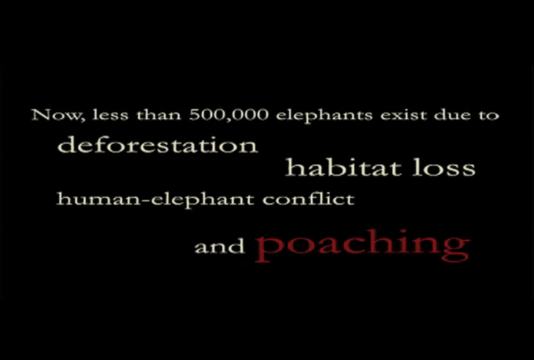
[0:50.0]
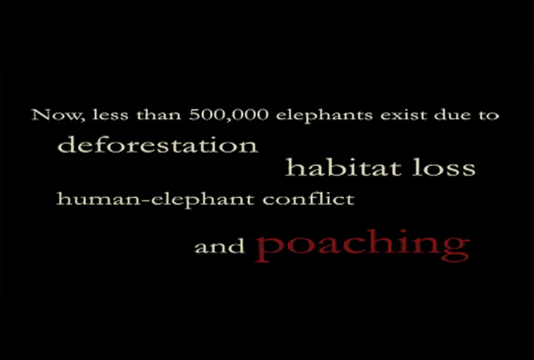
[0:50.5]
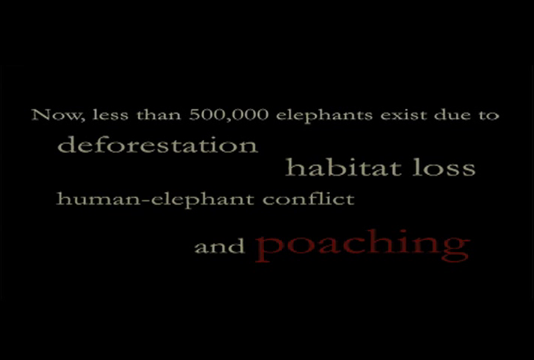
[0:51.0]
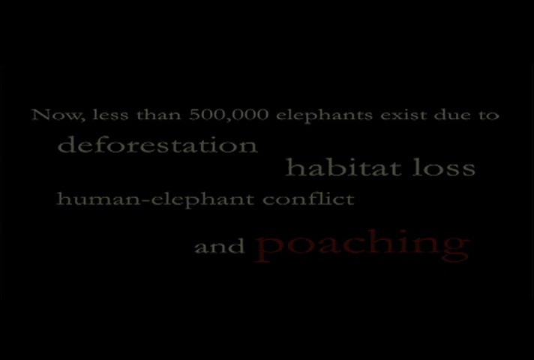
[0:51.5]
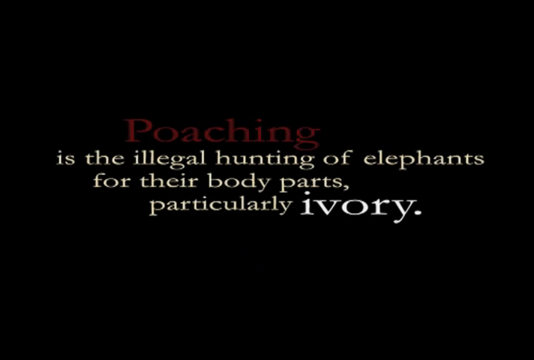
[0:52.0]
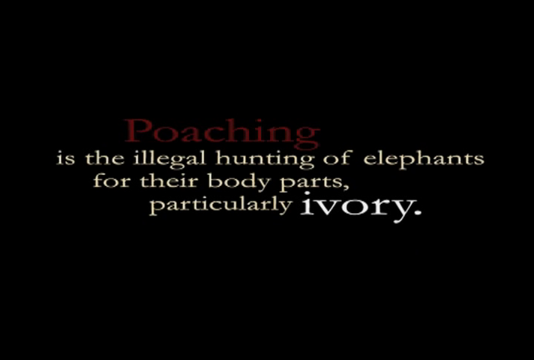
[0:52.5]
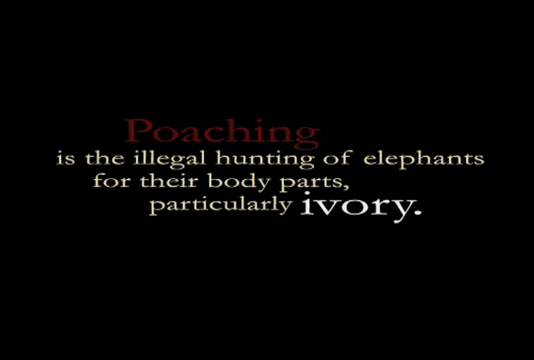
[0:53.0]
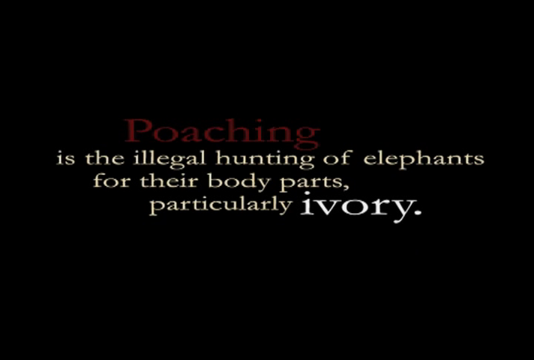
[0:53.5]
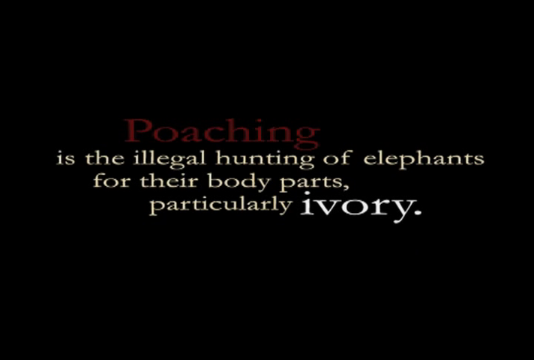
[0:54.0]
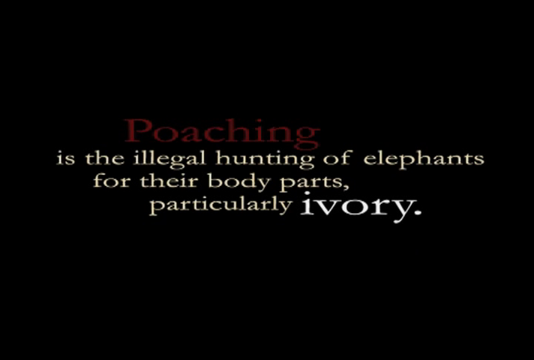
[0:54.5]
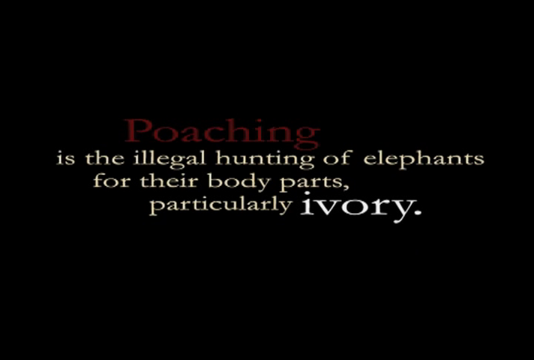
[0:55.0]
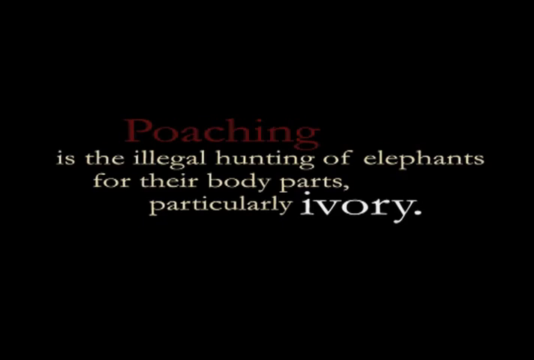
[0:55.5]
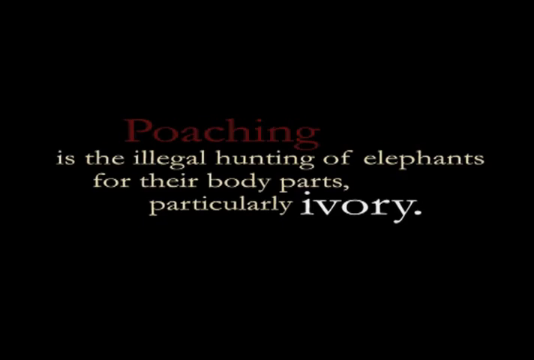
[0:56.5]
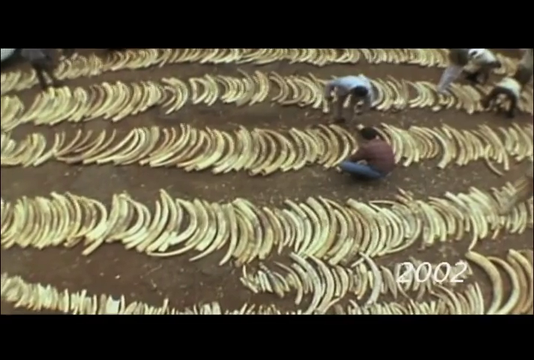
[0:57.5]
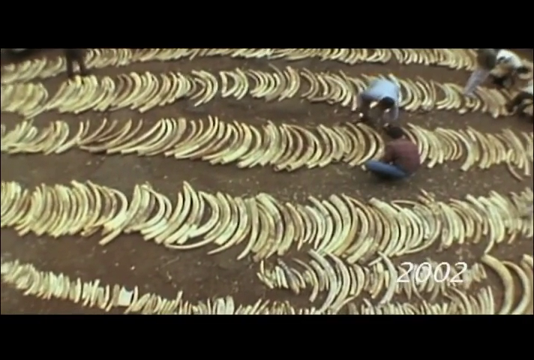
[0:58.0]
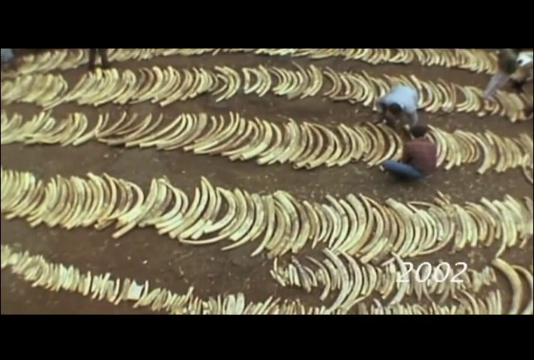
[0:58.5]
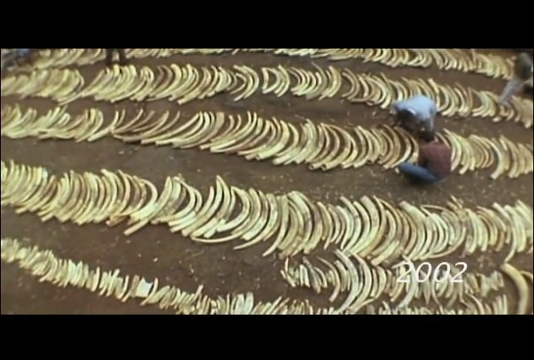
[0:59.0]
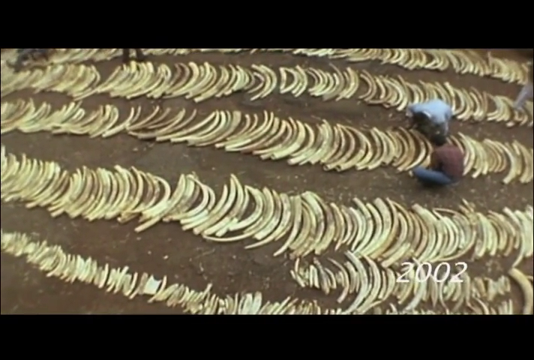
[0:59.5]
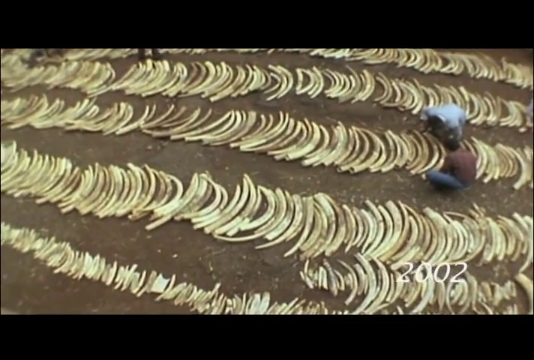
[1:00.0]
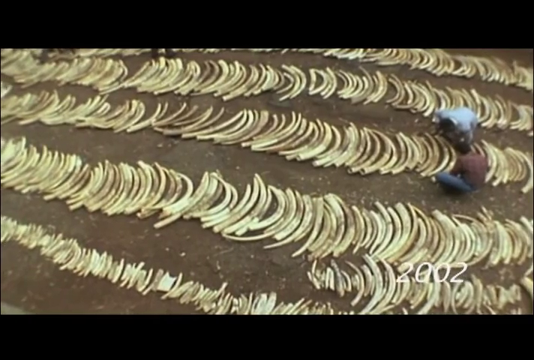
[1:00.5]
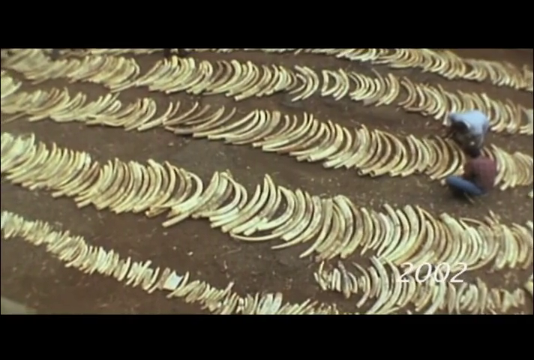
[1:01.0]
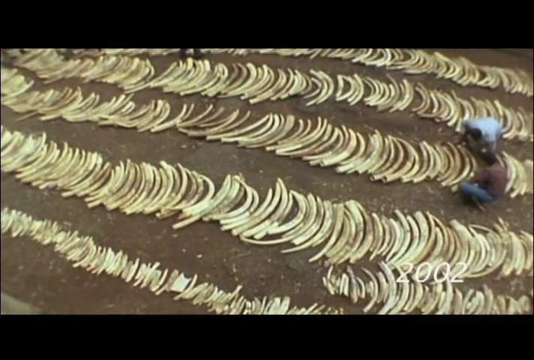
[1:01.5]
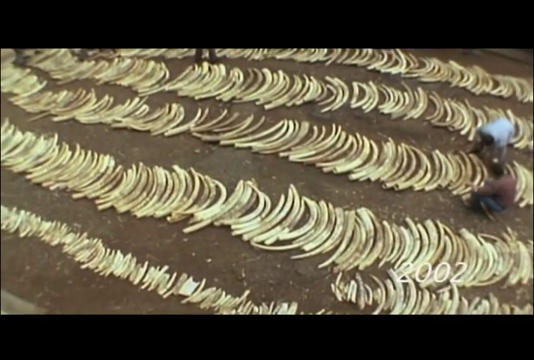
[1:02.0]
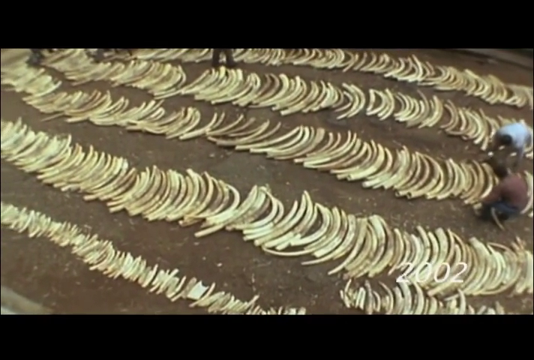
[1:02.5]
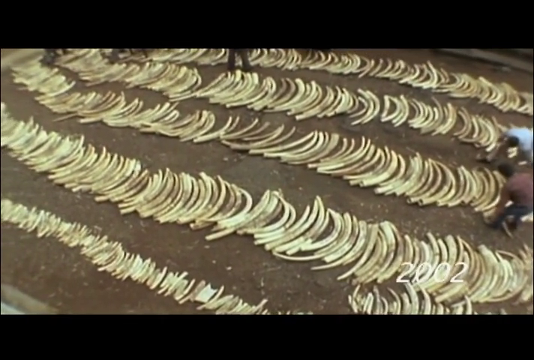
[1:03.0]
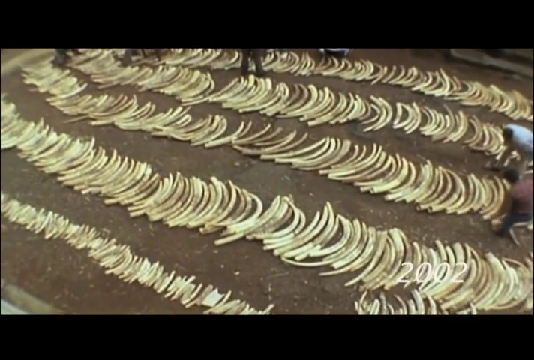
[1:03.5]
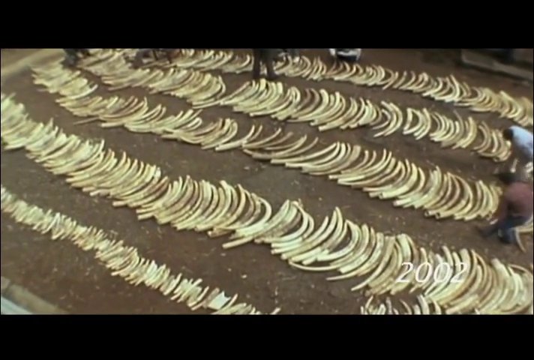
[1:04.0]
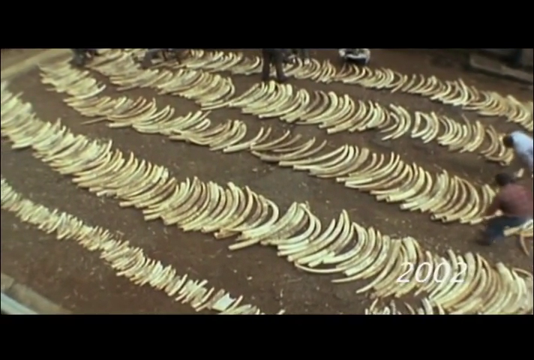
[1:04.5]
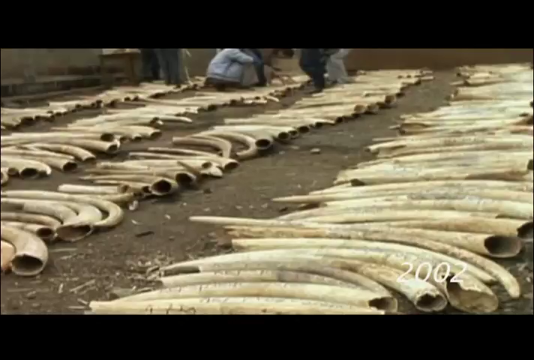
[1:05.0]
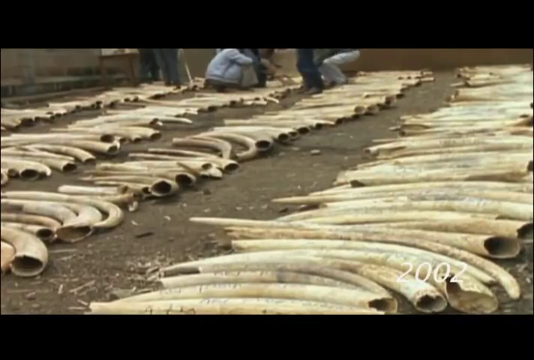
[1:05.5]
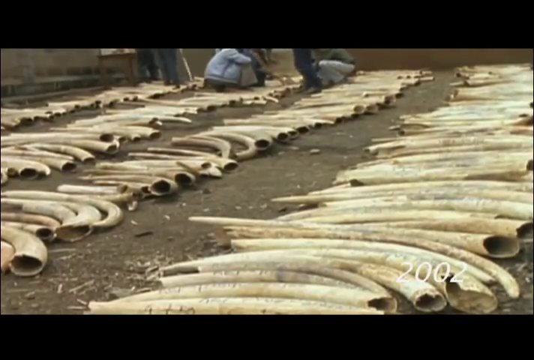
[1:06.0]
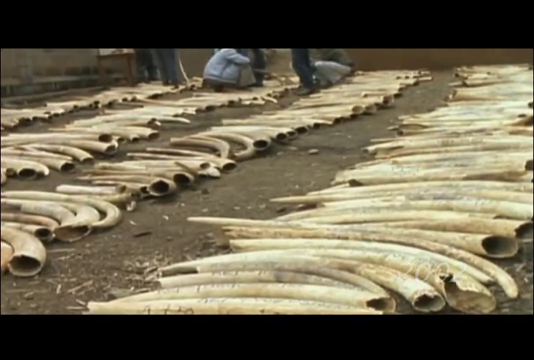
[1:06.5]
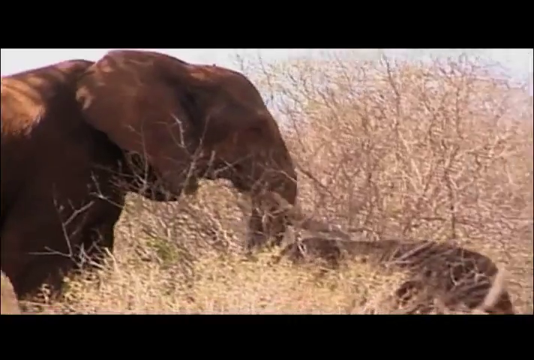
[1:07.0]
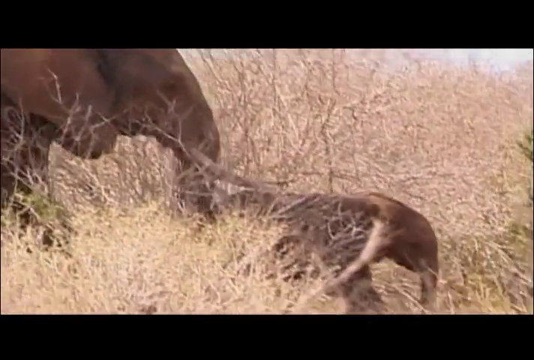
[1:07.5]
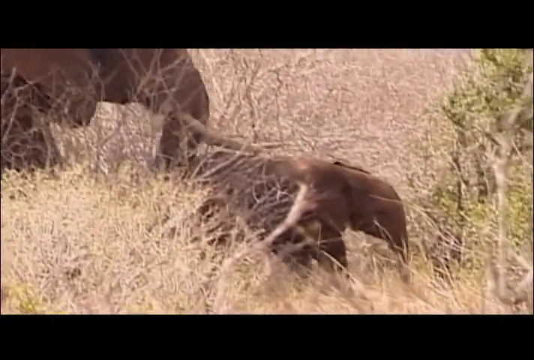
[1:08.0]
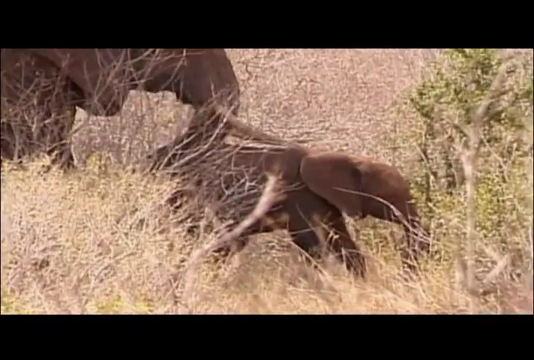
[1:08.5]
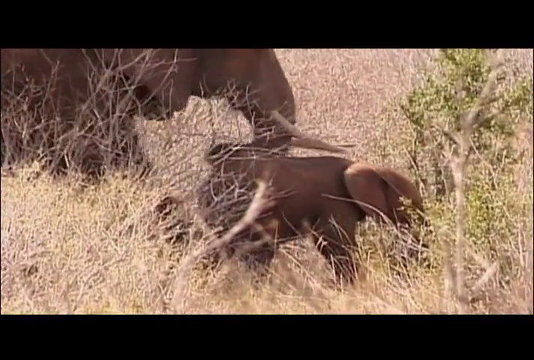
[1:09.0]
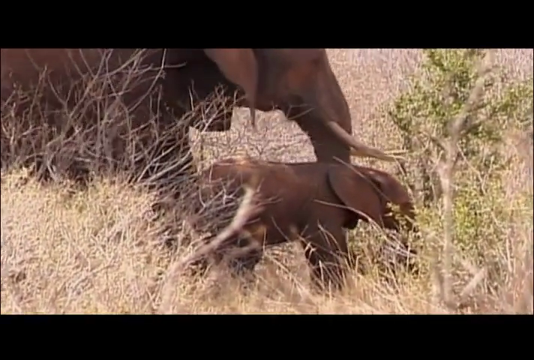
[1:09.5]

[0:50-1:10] On the black screen, the red word "poaching" is followed in white by "is the illegal hunting of elephants for their body parts particularly ivory." The video cuts to an aerial shot of a large area with hundreds of elephant tusks laid out side by side on a floor. People squat down looking at the tusks, moving and rearranging them. A different angle shows the tusks laid out on the ground or a floor, with people touching them. The video then shows a mother elephant behind some tall grass urging her baby forward as they walk through the grass.